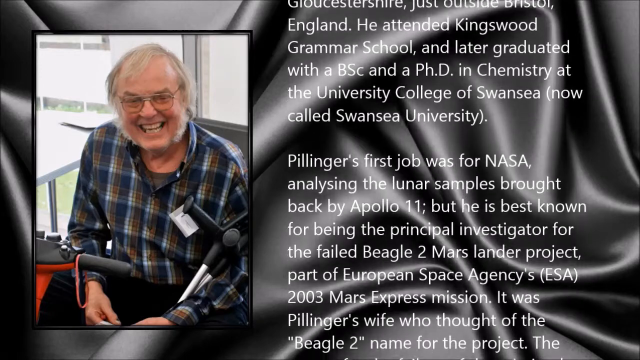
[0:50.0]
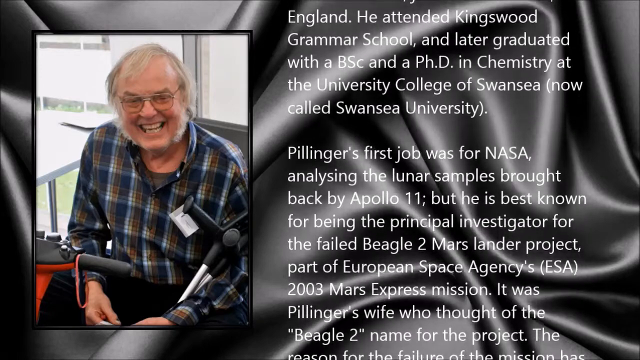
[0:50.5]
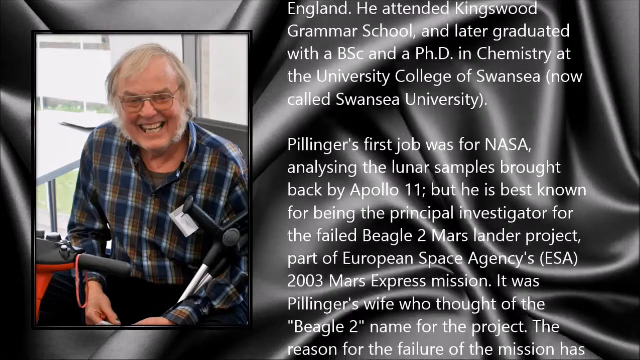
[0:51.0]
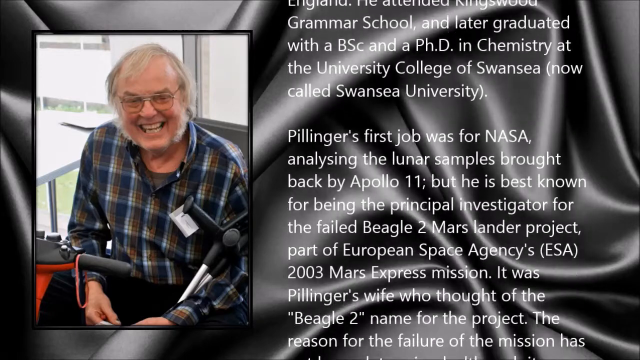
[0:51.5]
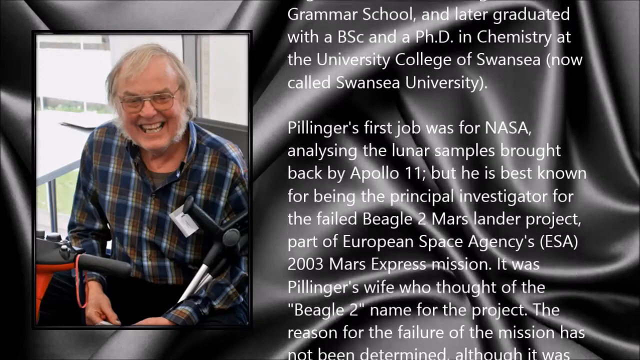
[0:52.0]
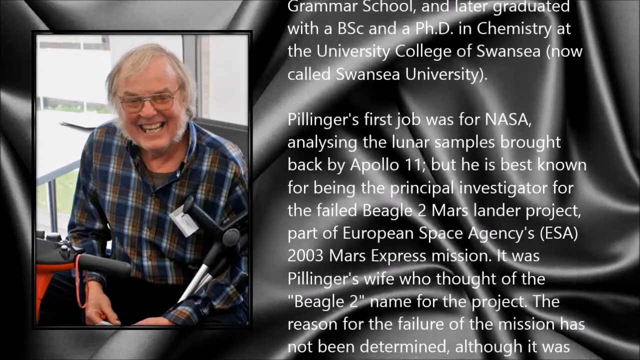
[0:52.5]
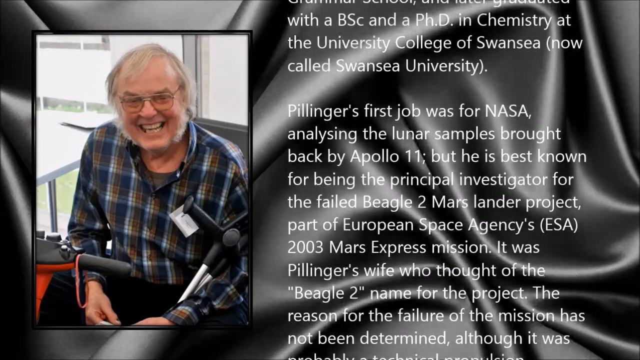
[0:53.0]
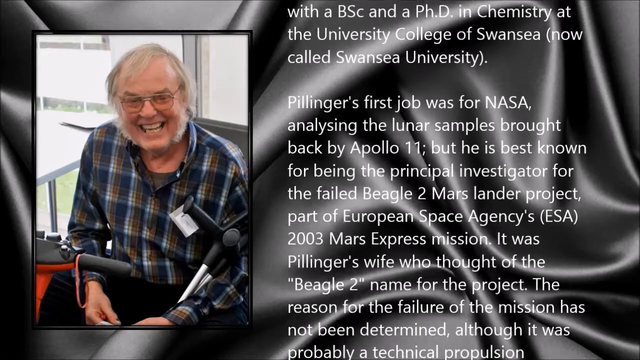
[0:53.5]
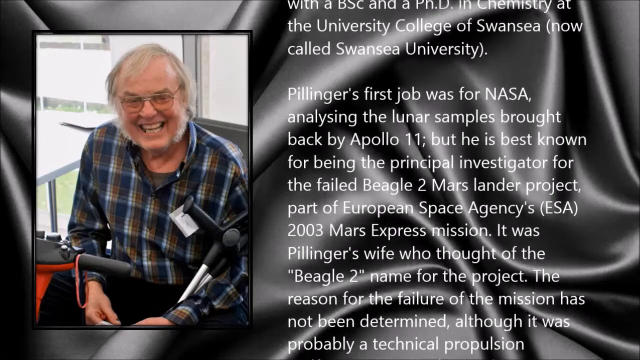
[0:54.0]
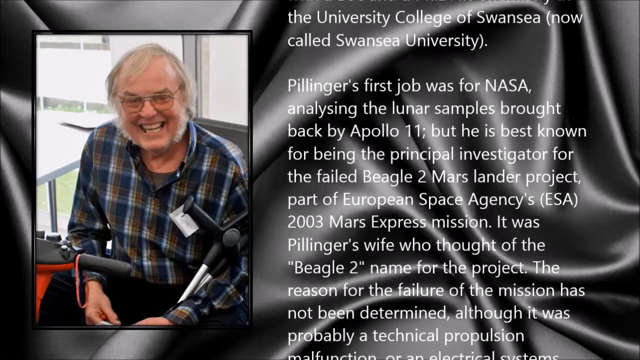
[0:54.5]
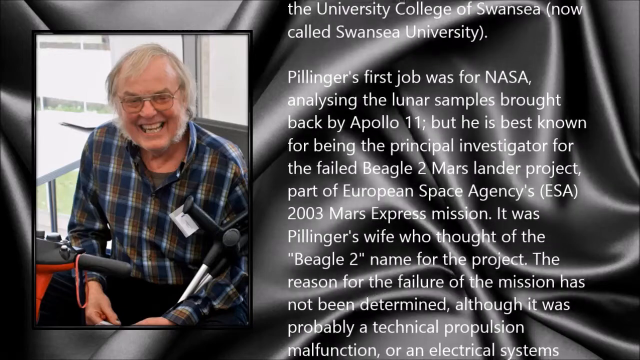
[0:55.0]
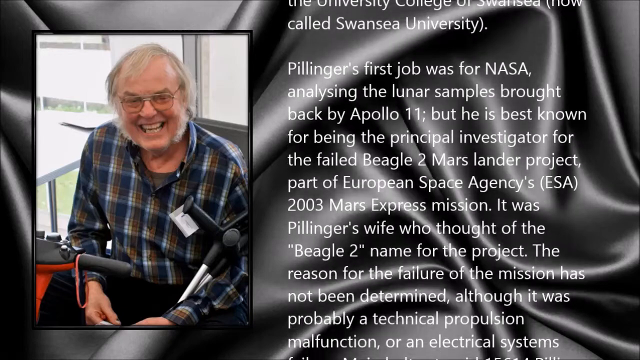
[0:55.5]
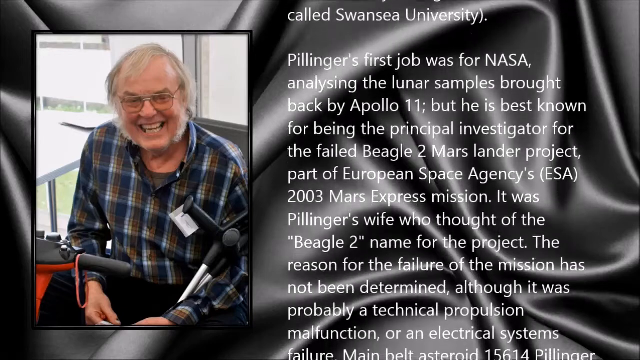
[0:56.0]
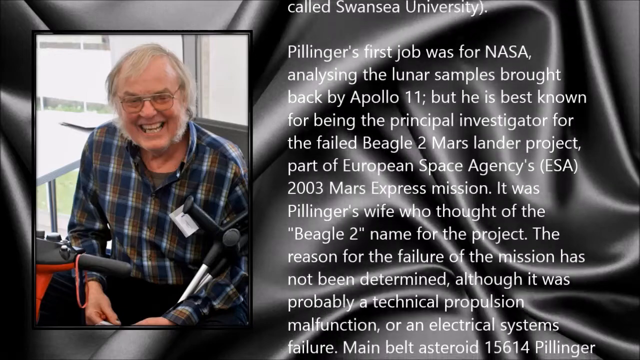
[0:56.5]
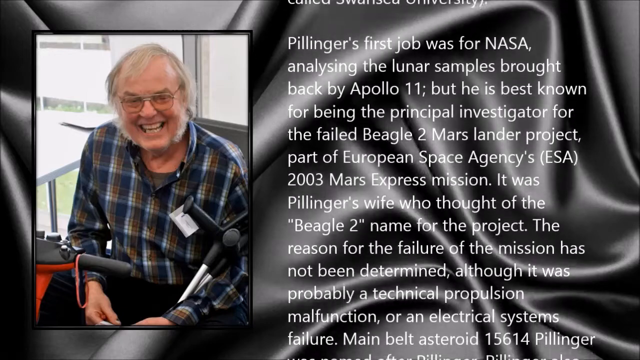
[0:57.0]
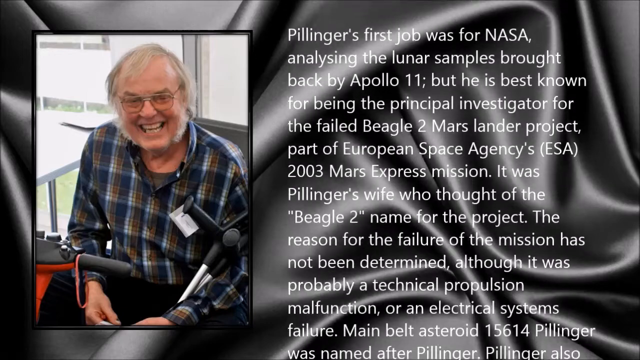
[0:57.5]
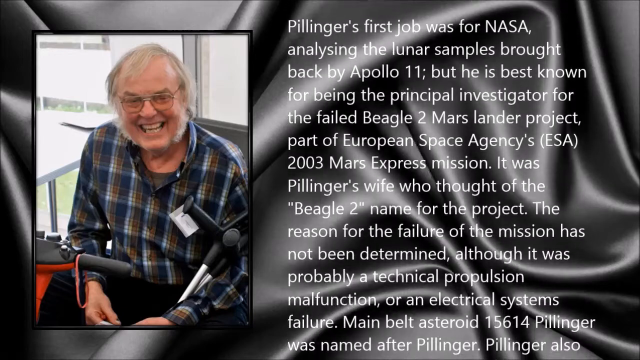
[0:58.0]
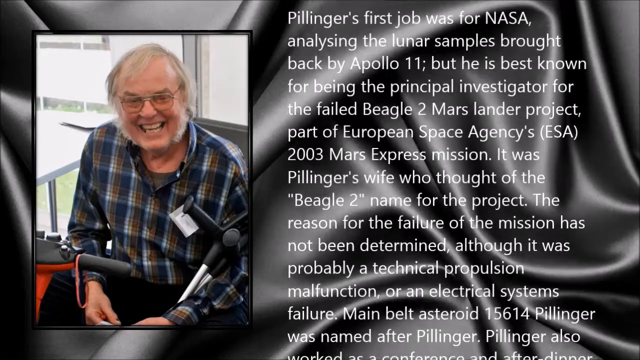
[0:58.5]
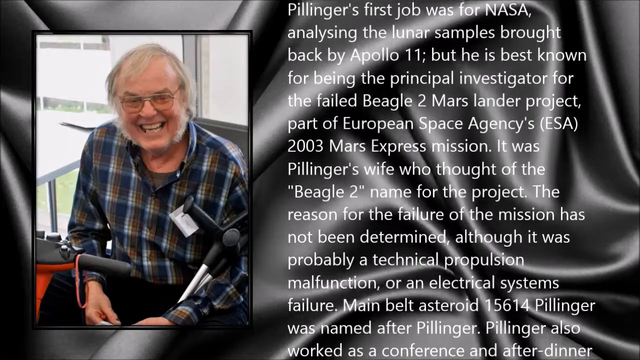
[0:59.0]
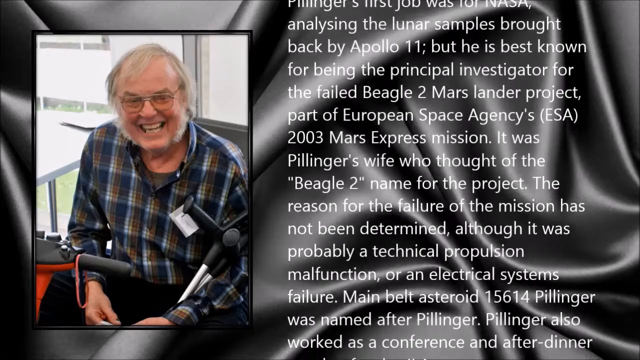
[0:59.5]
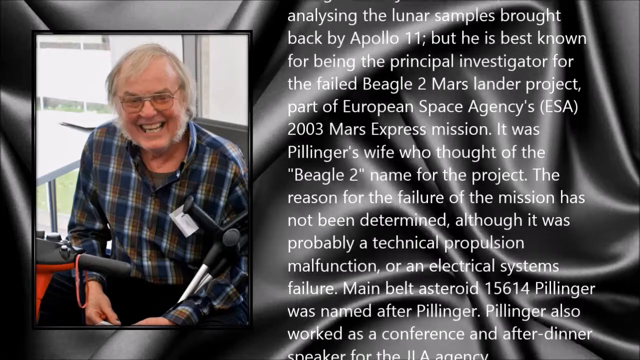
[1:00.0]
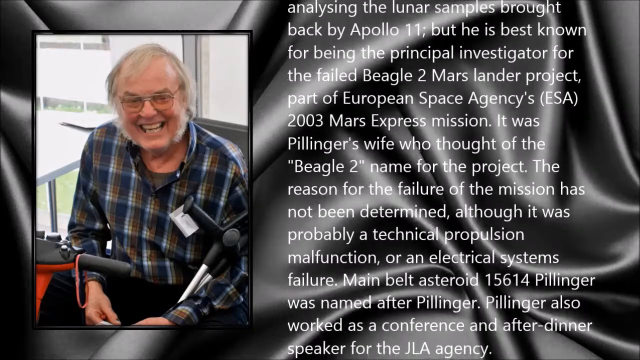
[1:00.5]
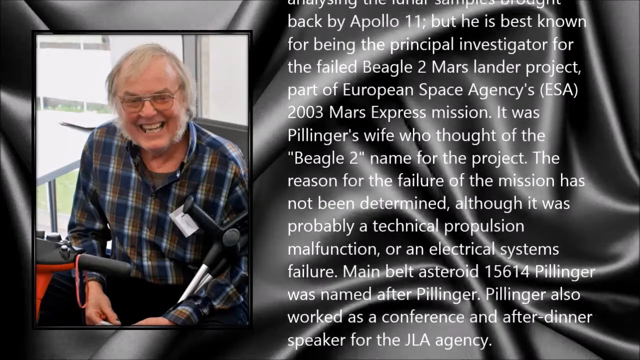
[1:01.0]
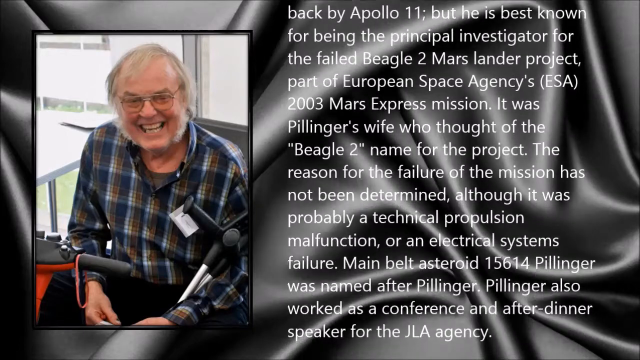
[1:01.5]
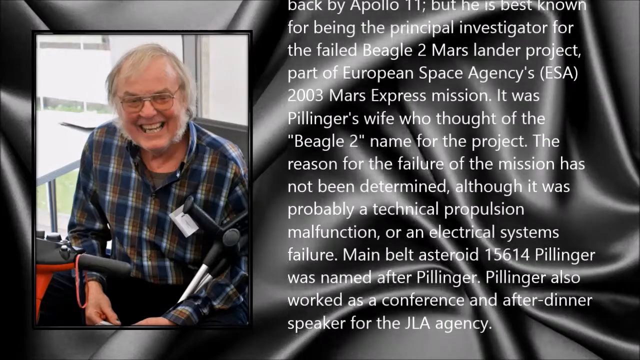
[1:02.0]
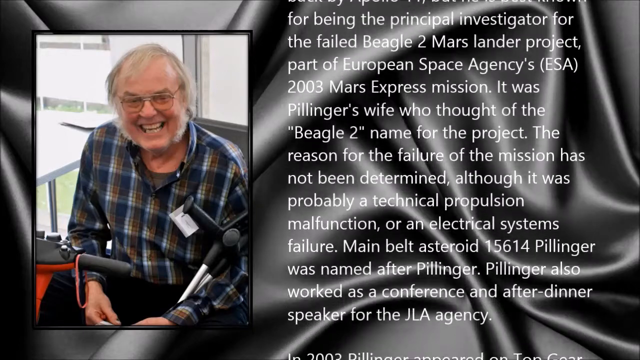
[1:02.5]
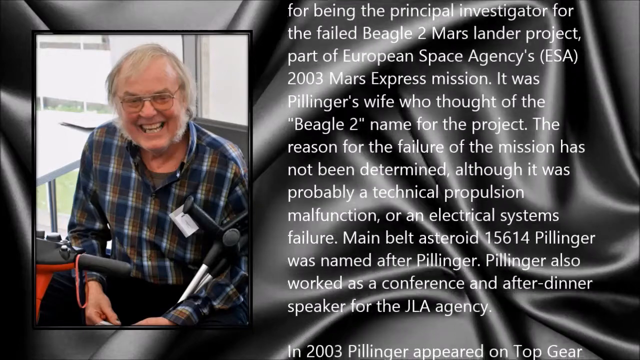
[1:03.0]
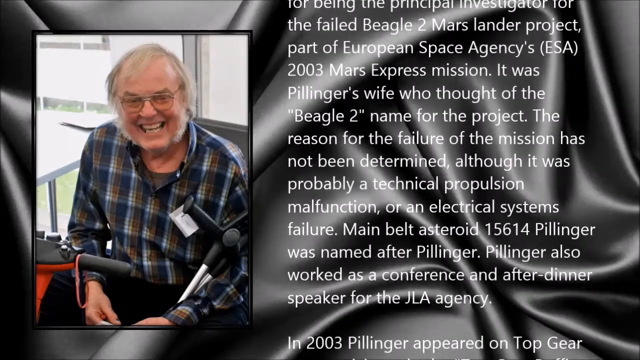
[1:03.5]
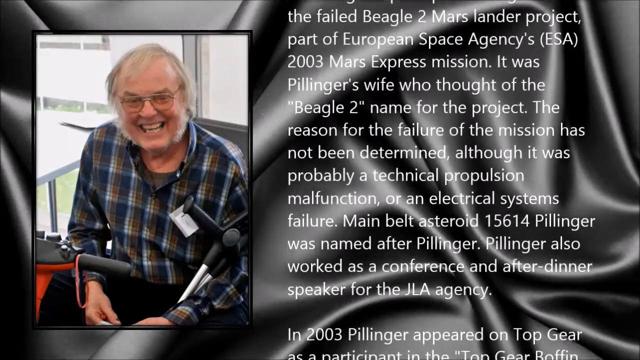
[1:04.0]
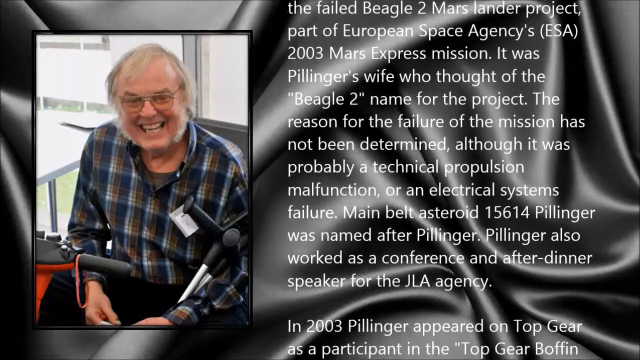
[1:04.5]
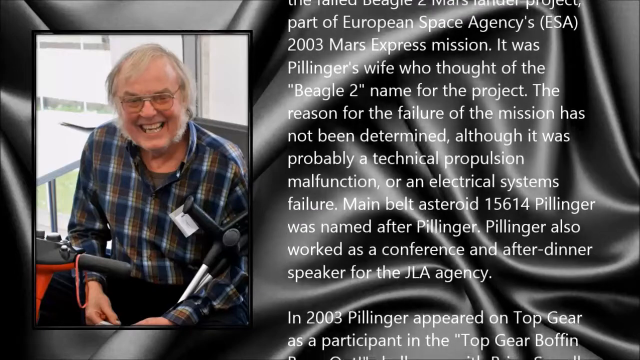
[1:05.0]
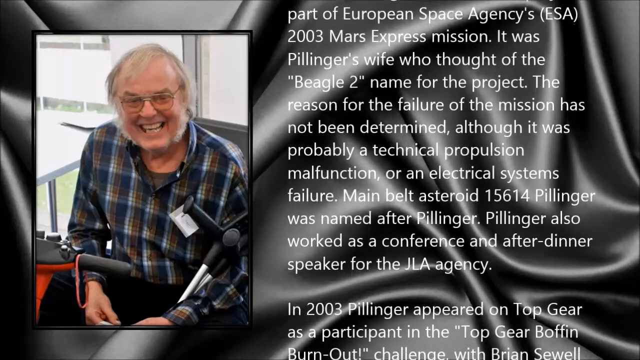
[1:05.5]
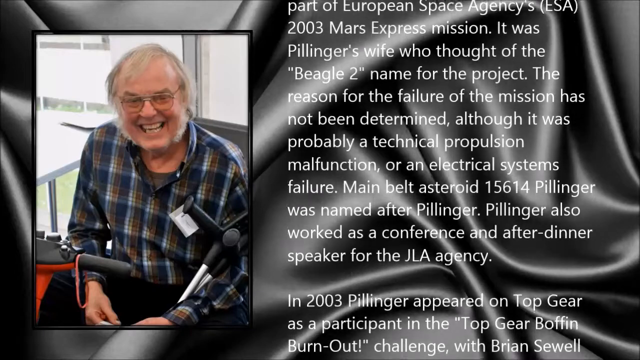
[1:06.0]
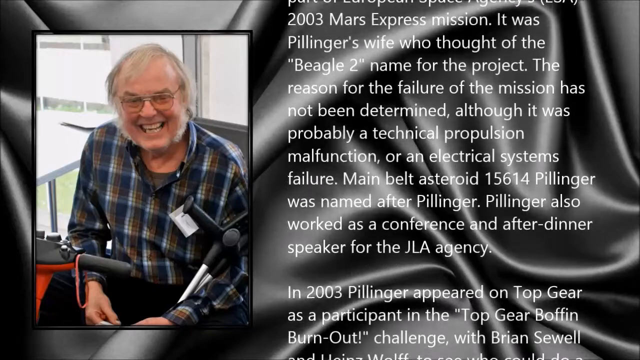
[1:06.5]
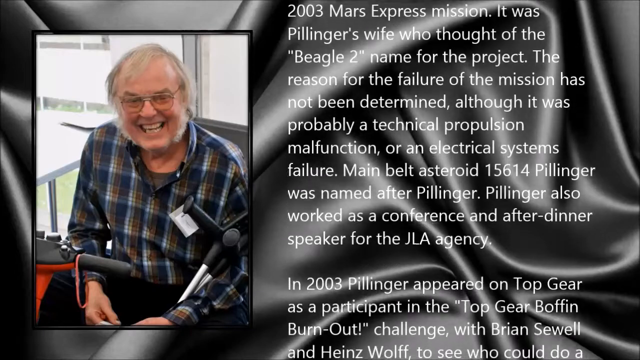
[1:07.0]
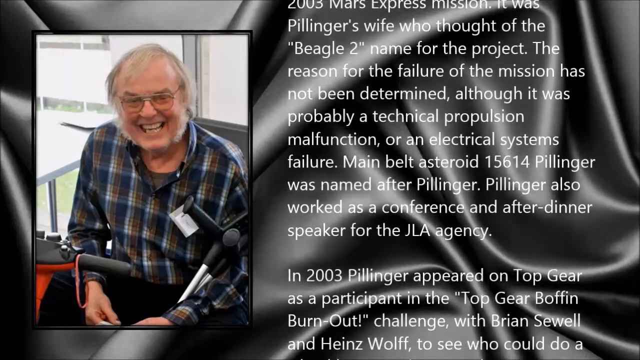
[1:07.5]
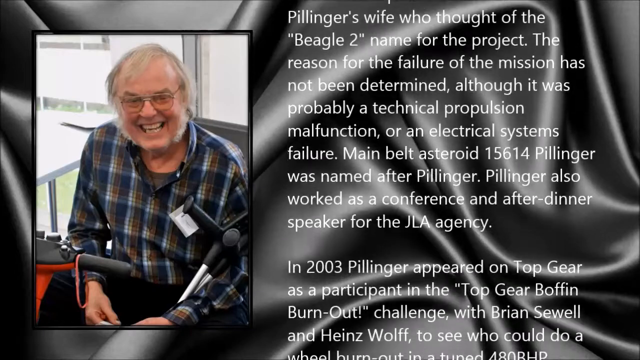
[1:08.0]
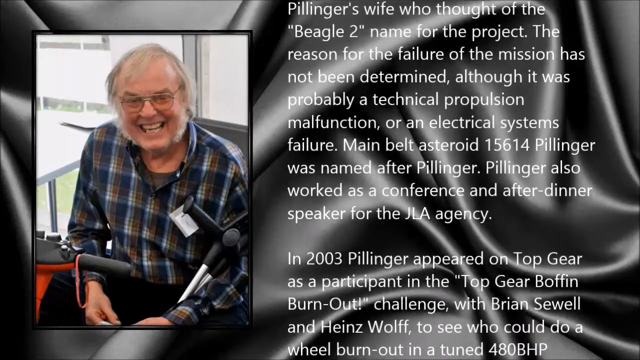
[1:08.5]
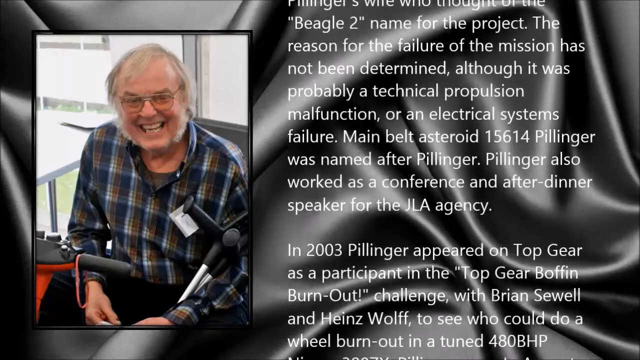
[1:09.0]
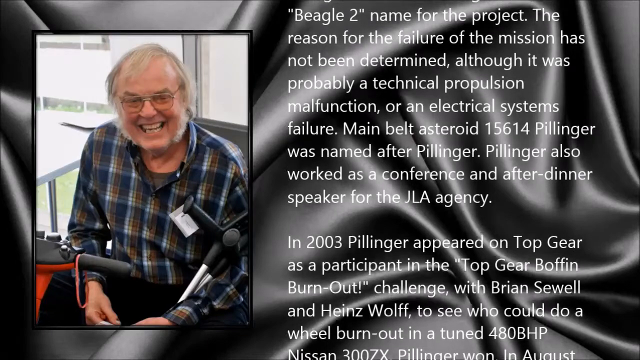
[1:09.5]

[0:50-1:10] On a black silk background, a picture of a man is on the left-hand side of the screen. He wears glasses and a blue, white and yellow checked shirt, and has grey or white hair and a beard. To the right of the image, white text pans from the bottom upwards. The text states that Pillinger's first job at NASA was analysing samples brought back by Apollo 11, and that he is best known as an investigator for the Beagle 2 Mars Lander project, part of the ESA (European Space Agency) Mars Express mission in 2003. It then says that his wife thought of the name Beagle 2 for the project, and gives the reason for the mission's failure: though not determined, it was probably a technical propulsion malfunction. The text continues up the screen, stating that a main belt asteroid was named after Pillinger and that he then worked as a conference and after-dinner speaker.